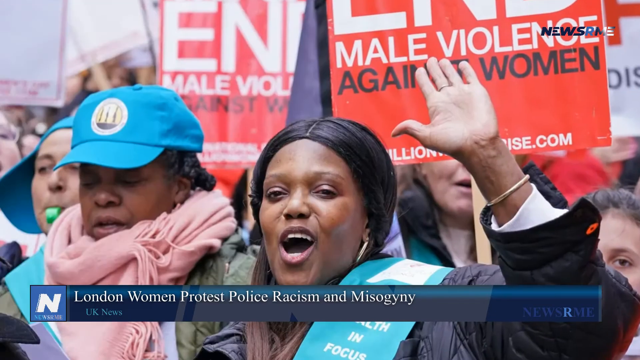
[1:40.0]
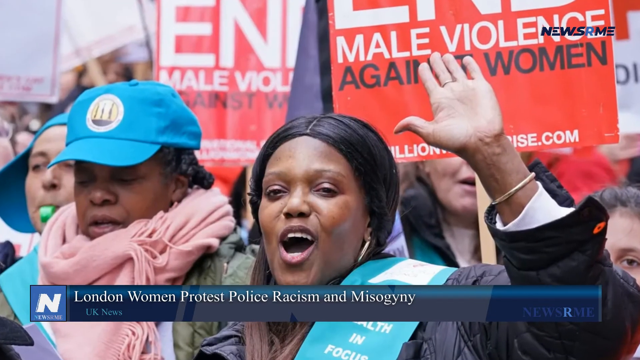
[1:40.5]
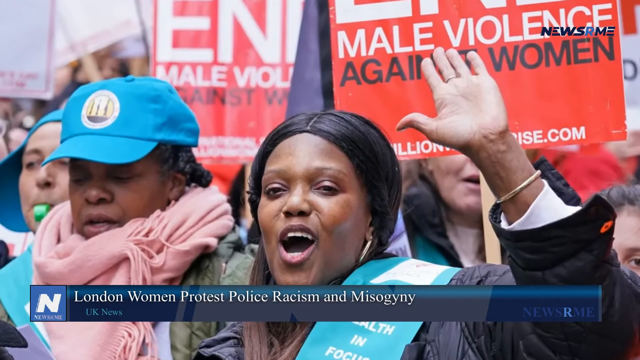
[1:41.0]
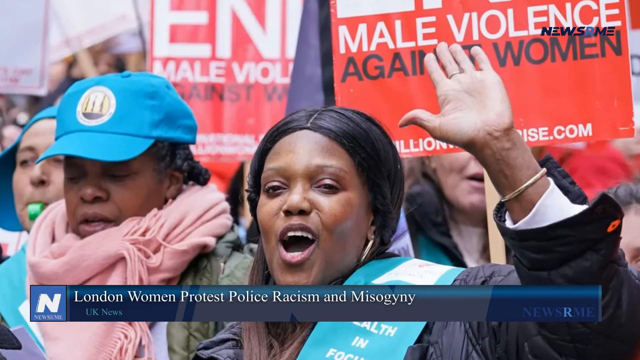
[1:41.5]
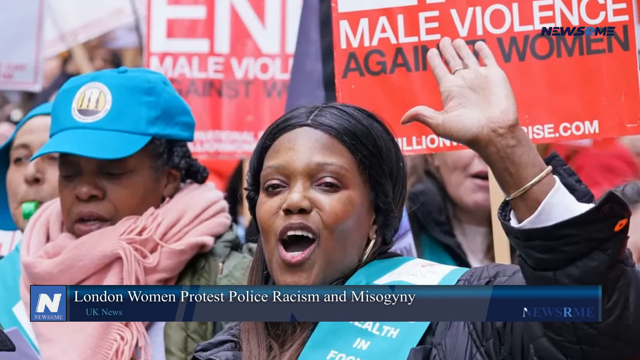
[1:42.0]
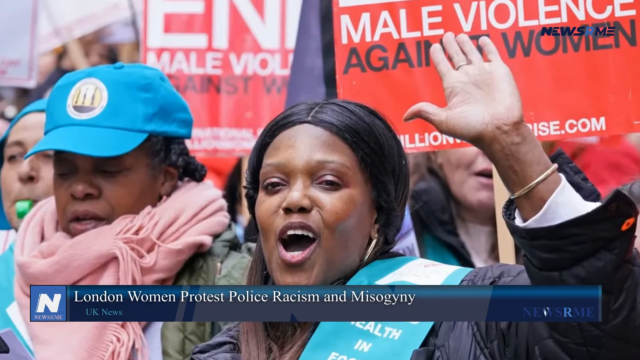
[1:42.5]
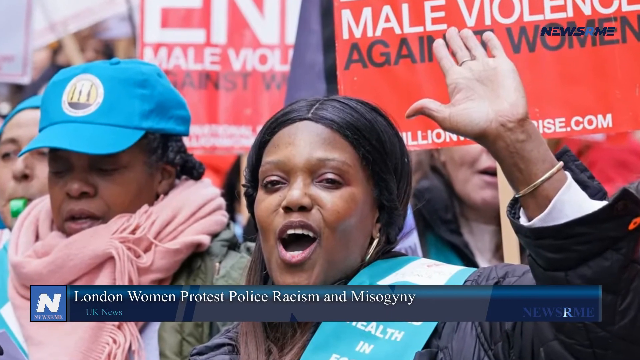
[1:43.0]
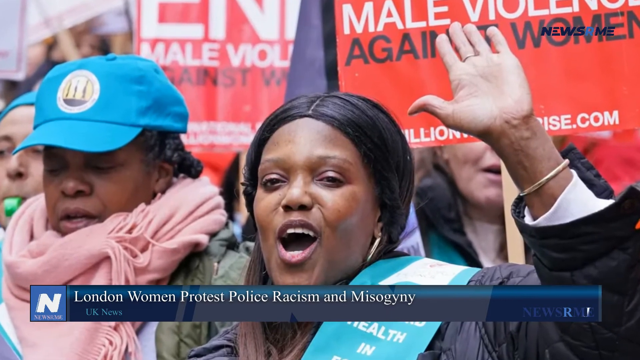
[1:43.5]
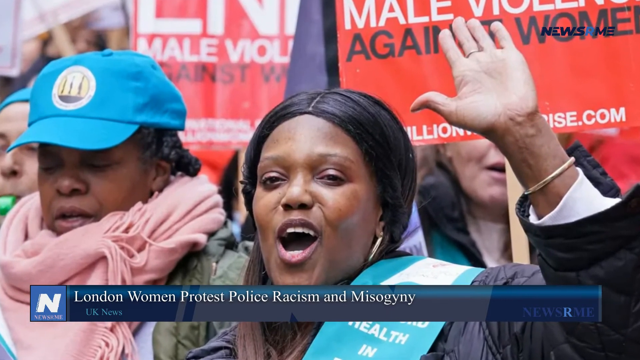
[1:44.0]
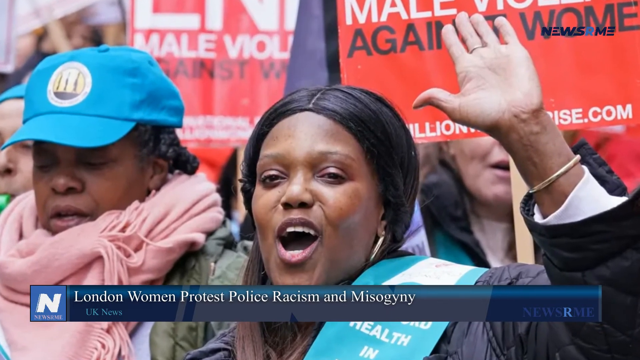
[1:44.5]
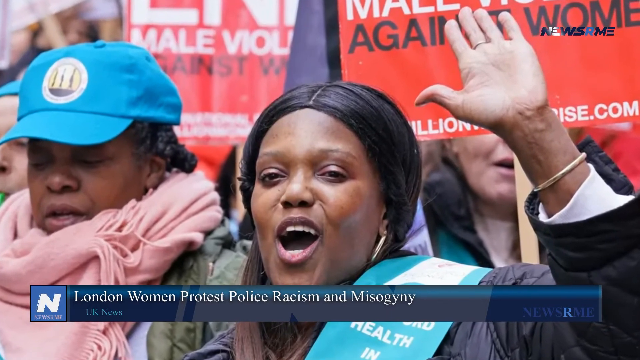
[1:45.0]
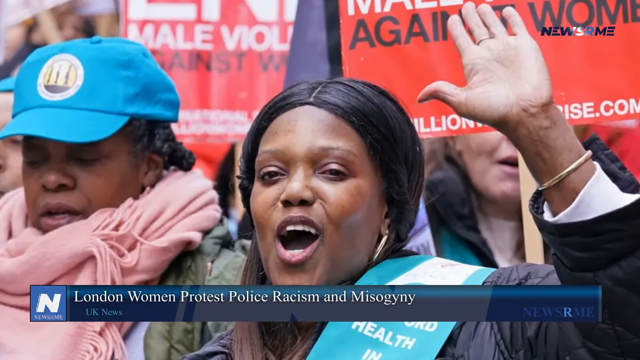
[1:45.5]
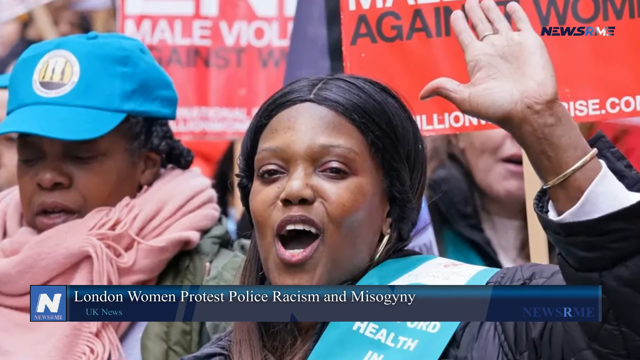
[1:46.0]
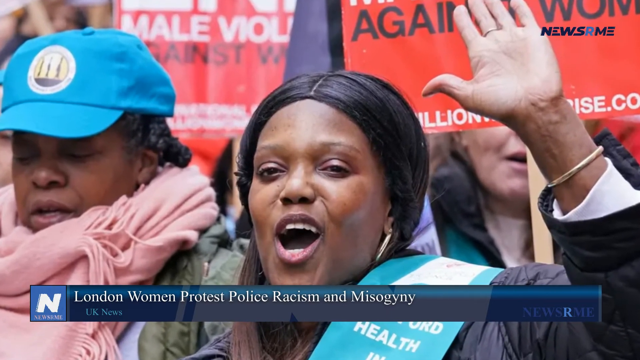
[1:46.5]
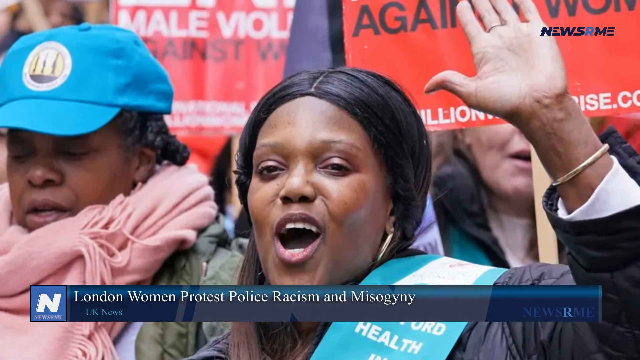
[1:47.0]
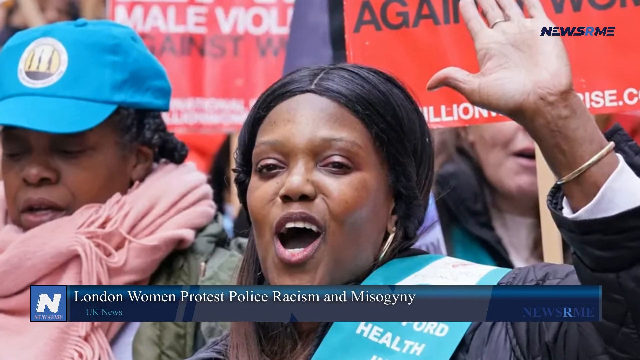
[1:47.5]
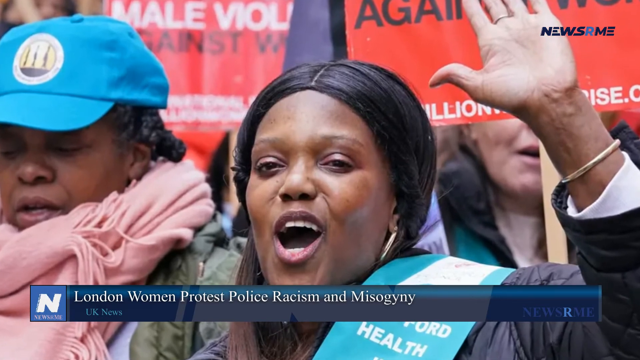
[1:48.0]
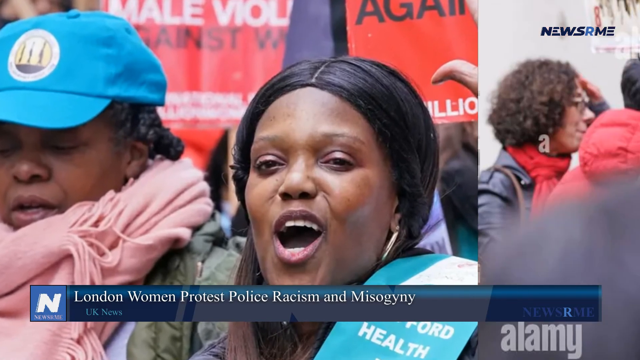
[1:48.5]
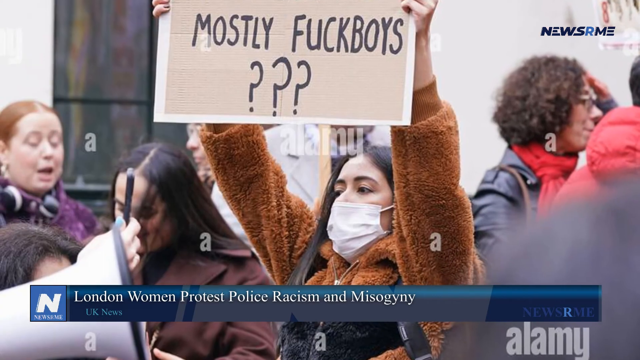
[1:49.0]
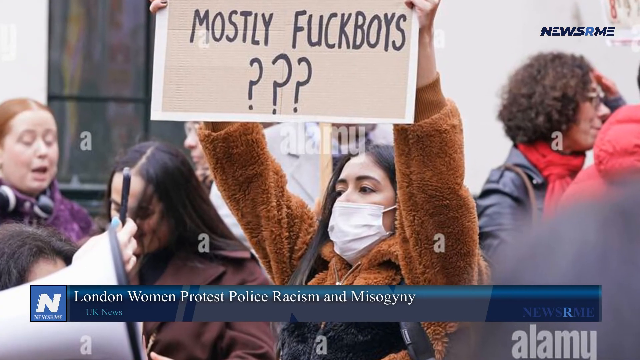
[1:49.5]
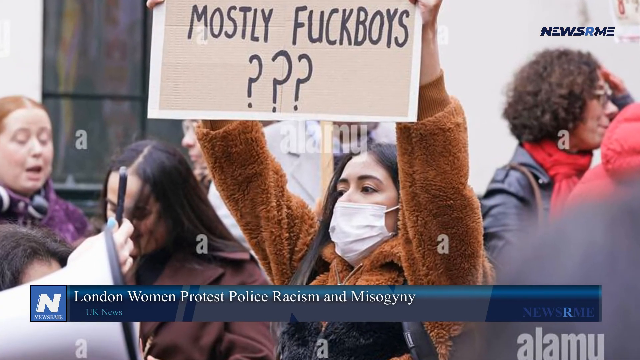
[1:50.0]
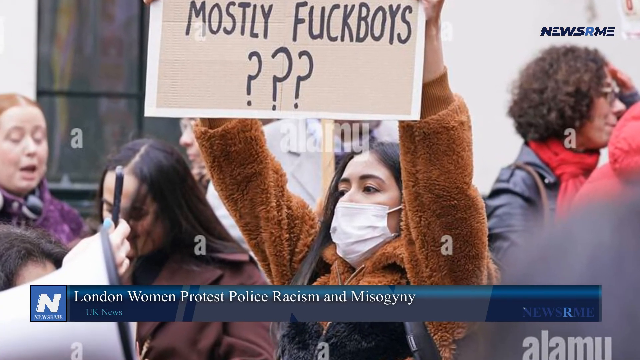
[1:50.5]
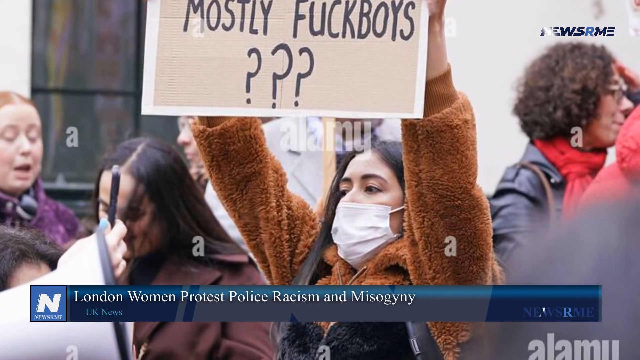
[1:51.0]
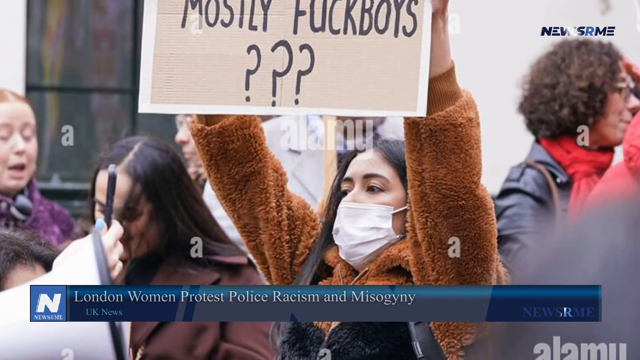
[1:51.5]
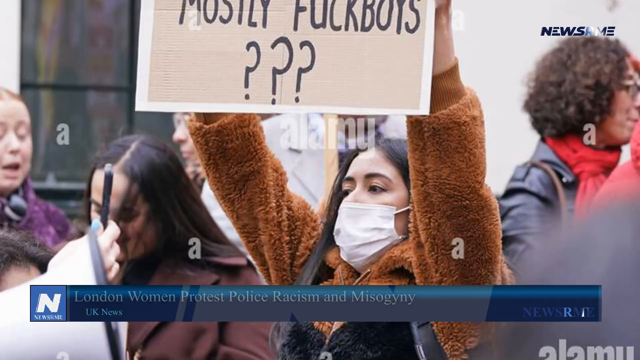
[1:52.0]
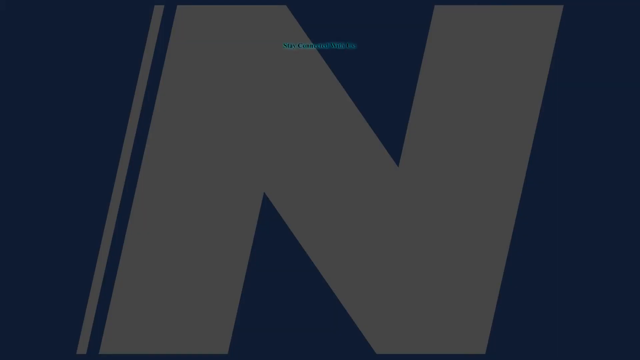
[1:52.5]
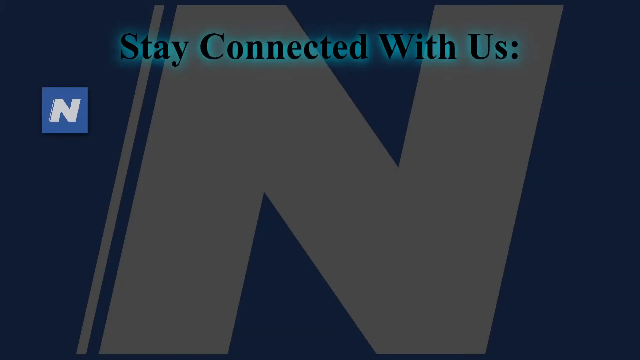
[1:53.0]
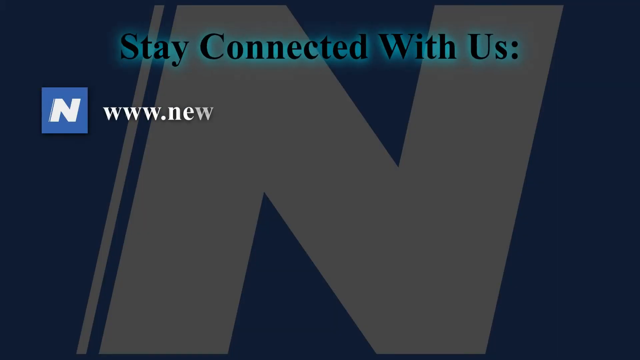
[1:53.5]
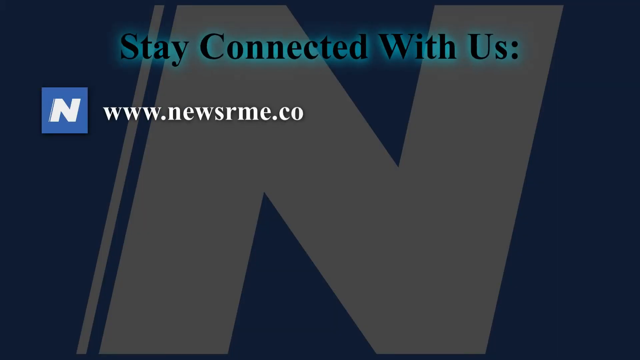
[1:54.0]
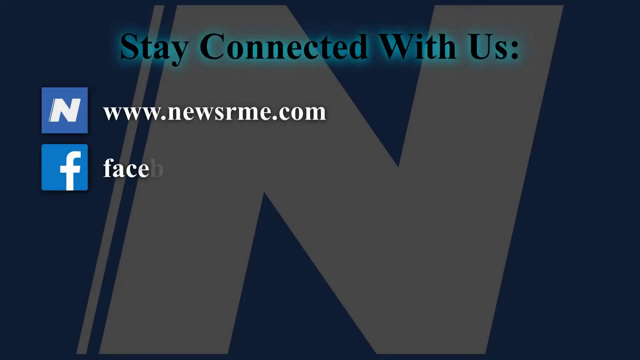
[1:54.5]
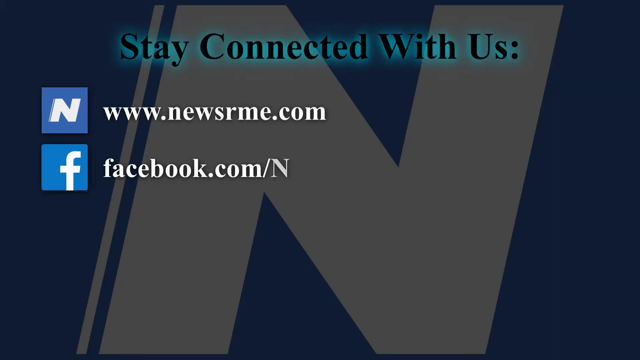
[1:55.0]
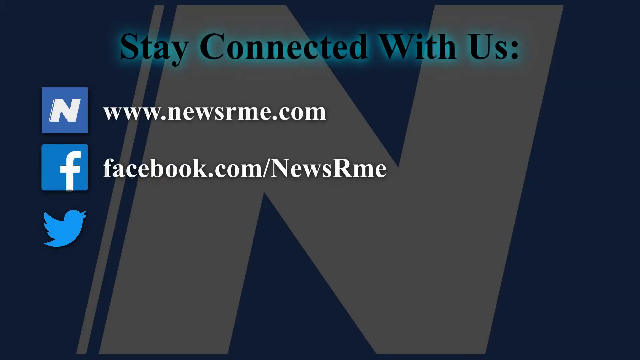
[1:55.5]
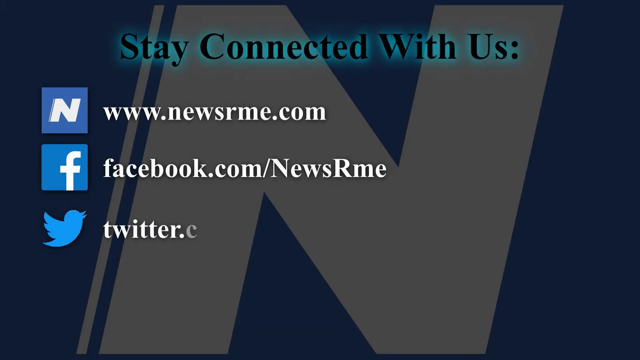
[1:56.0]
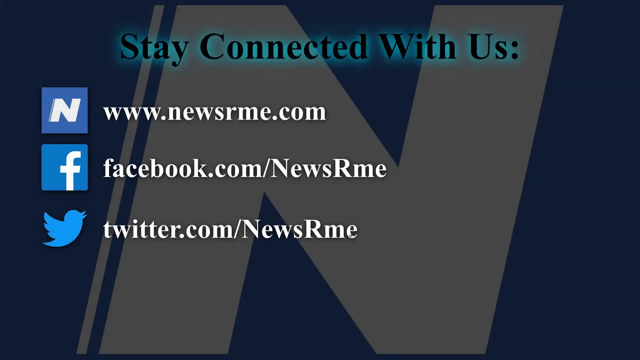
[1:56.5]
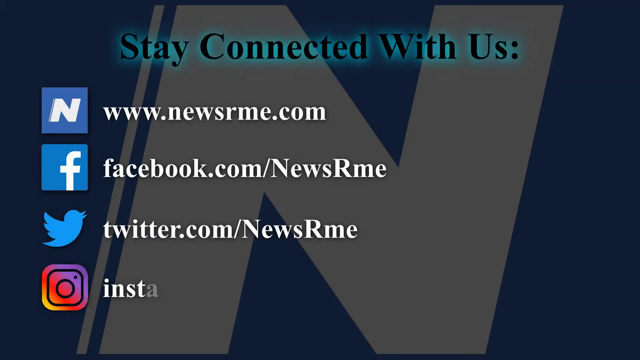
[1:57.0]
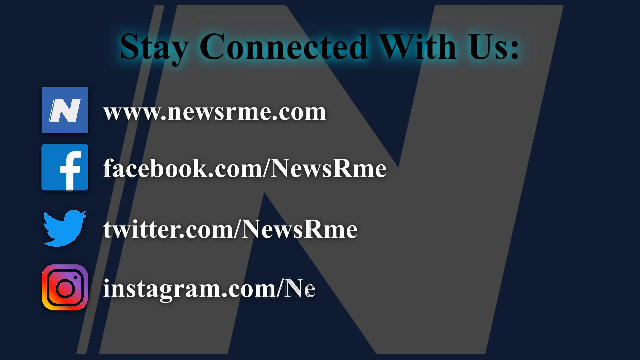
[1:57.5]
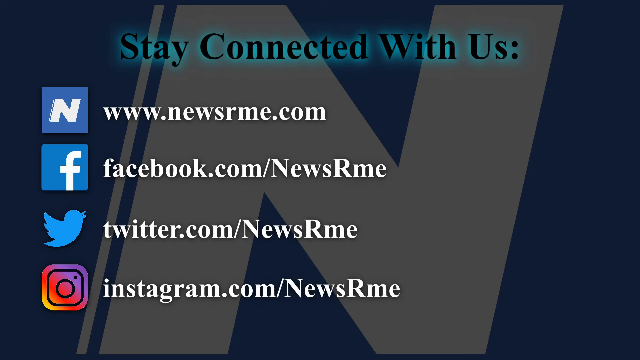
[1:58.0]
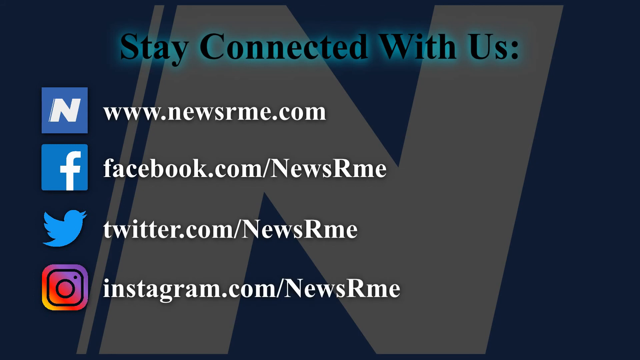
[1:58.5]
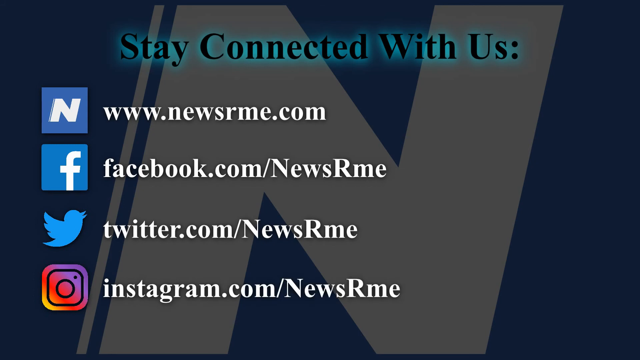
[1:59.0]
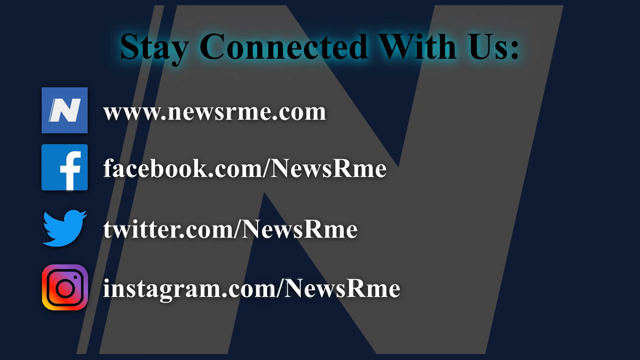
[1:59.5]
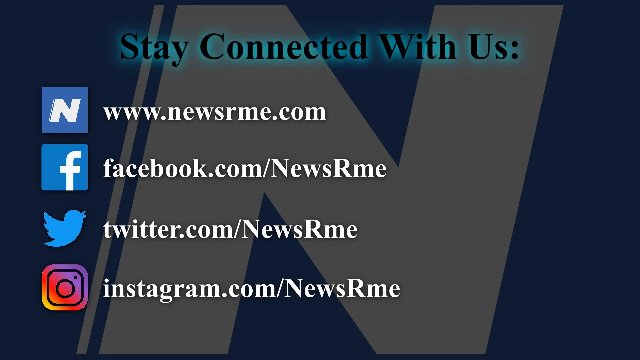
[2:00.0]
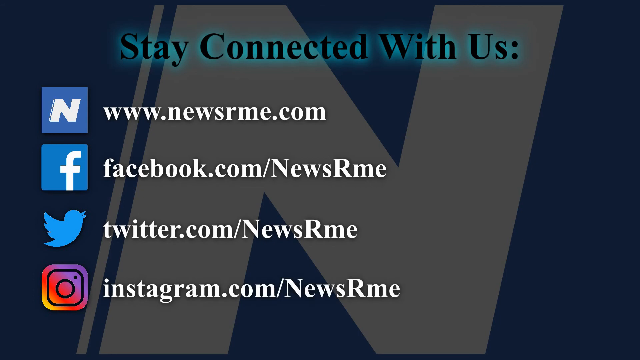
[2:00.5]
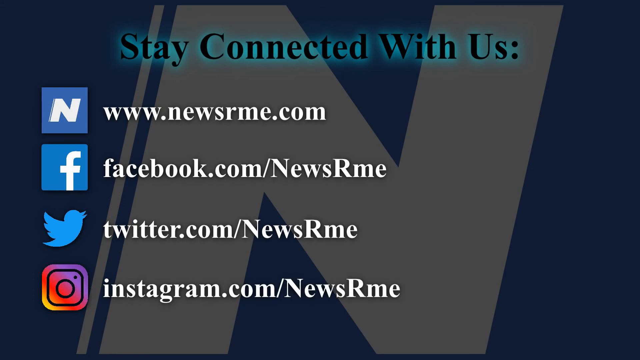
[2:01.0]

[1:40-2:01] A couple more photos from the women's march appear. The first shows two African-American women; one has her hands raised and her mouth open, apparently shouting or joining in the chanting. Next to her is a woman with a blue baseball hat and a pink scarf around her neck, and next to her is another woman with a blue baseball hat who looks to be blowing a whistle. Behind them are more women holding signs. The next photograph is apparently a repeat of earlier photos of women carrying different signs with different messages. At the very end, the protest gives way to a stylized background with the News RME logo at the top and, below it, the company's social media handles for Facebook, Twitter and Instagram.